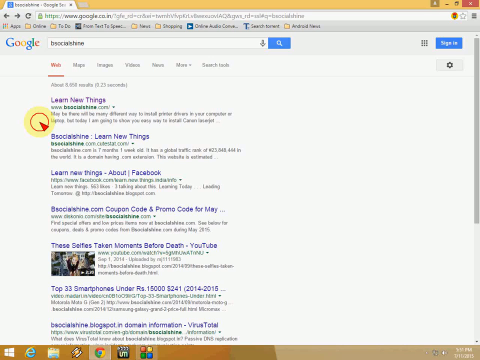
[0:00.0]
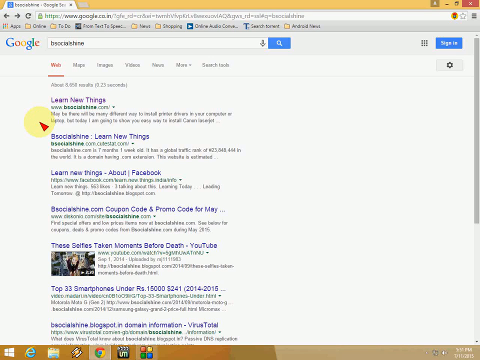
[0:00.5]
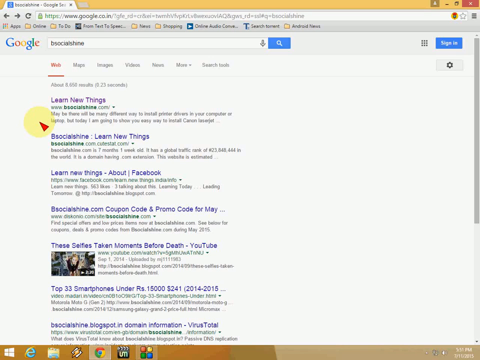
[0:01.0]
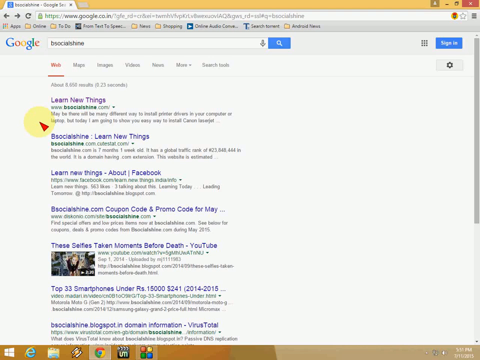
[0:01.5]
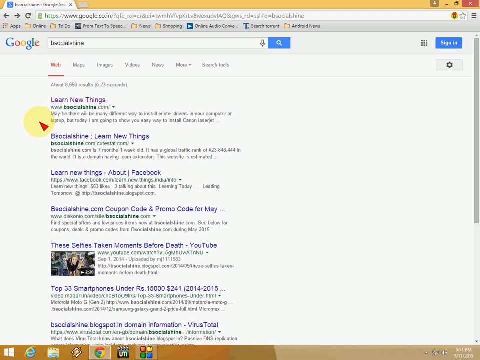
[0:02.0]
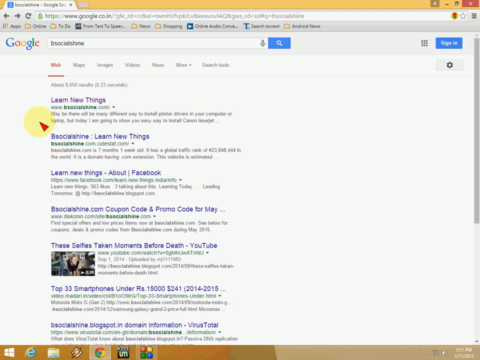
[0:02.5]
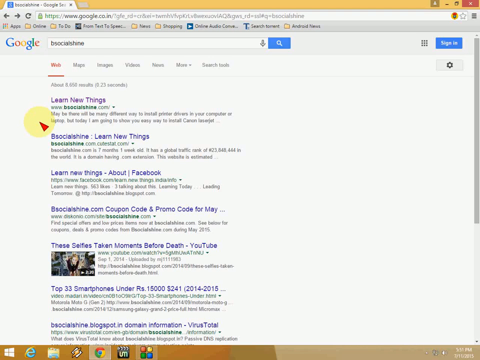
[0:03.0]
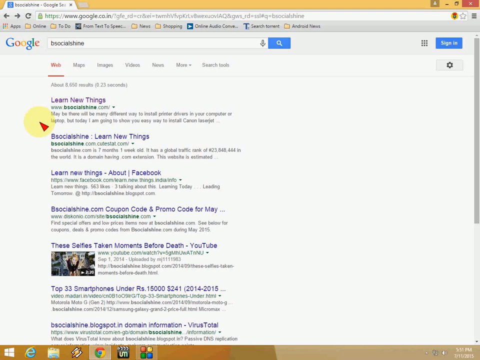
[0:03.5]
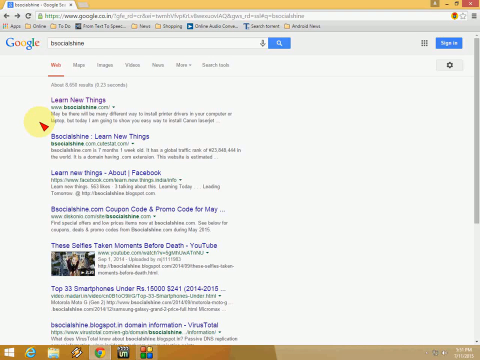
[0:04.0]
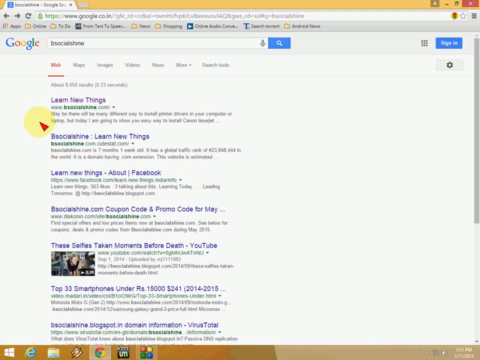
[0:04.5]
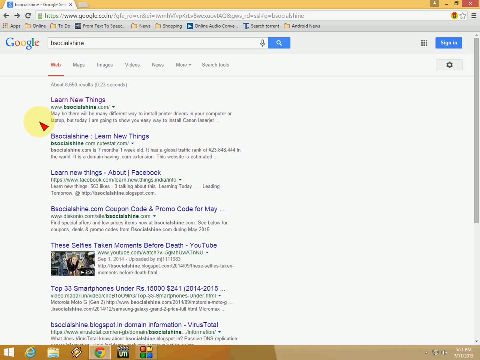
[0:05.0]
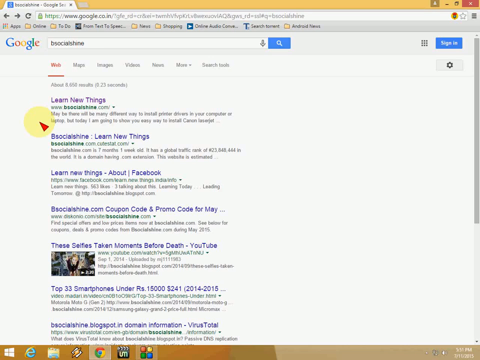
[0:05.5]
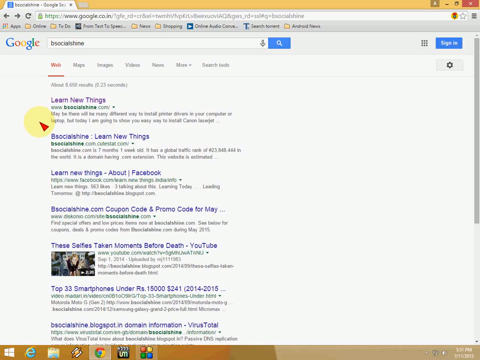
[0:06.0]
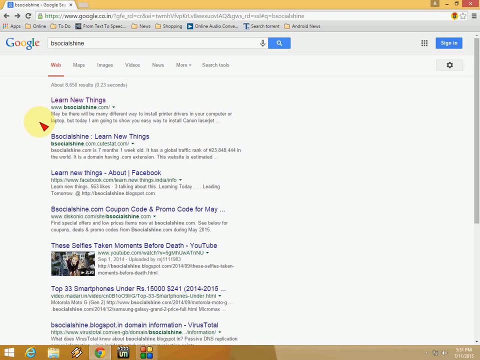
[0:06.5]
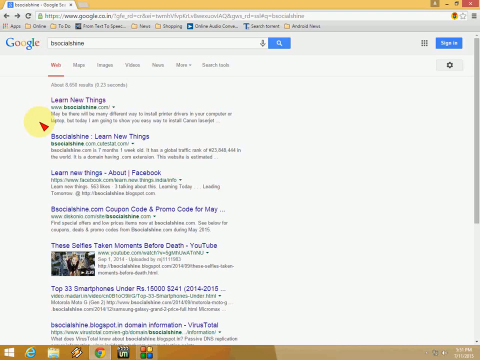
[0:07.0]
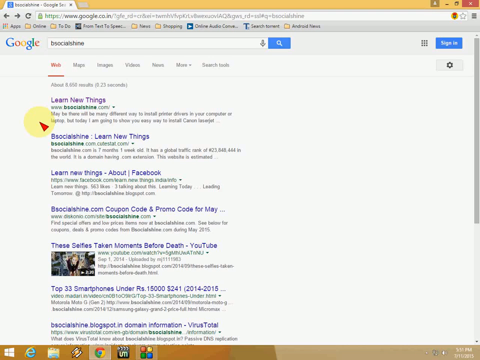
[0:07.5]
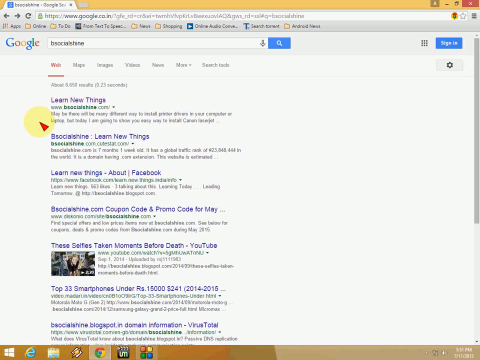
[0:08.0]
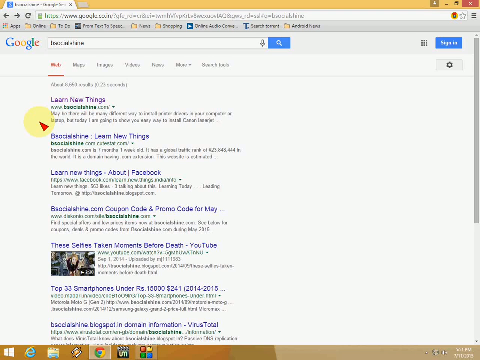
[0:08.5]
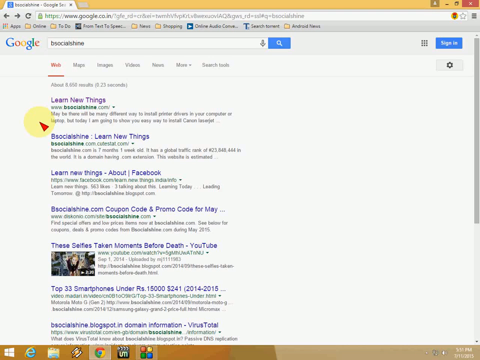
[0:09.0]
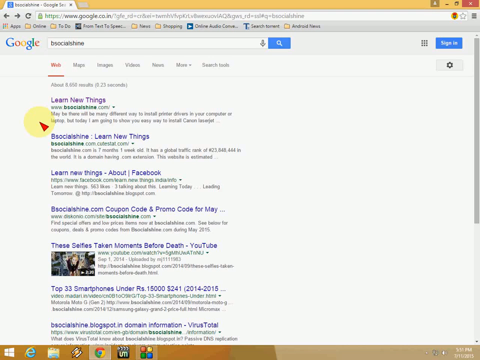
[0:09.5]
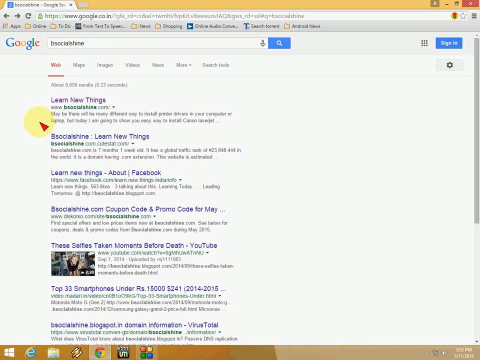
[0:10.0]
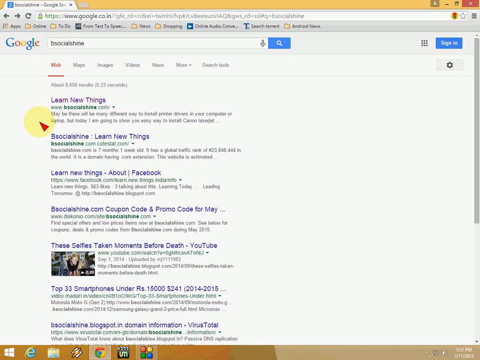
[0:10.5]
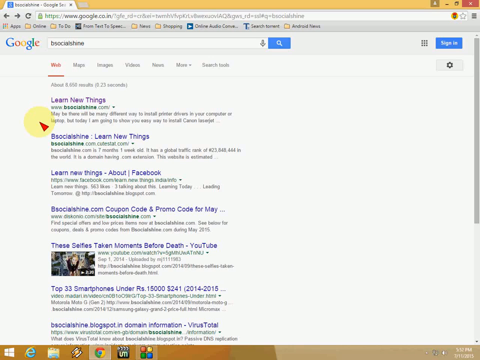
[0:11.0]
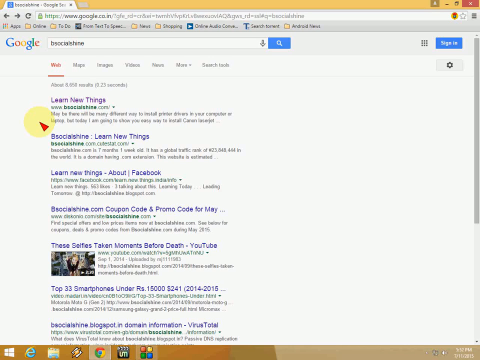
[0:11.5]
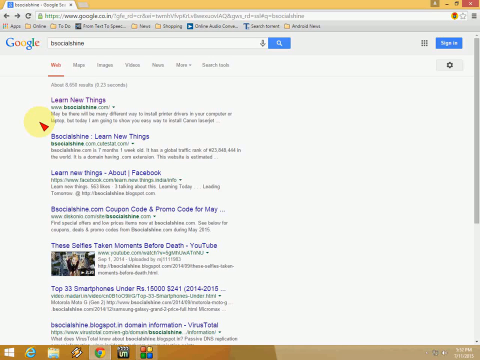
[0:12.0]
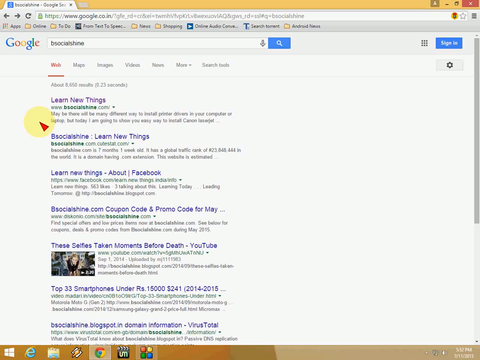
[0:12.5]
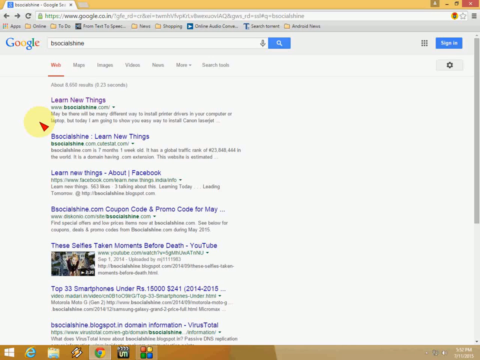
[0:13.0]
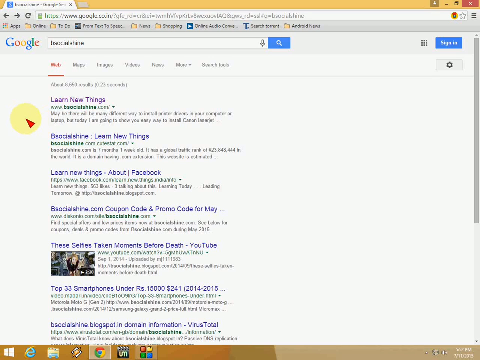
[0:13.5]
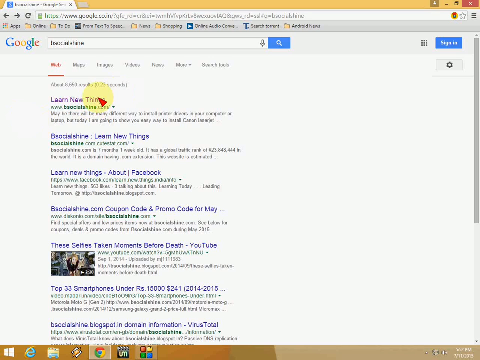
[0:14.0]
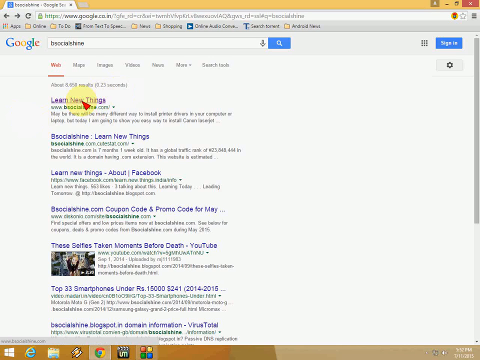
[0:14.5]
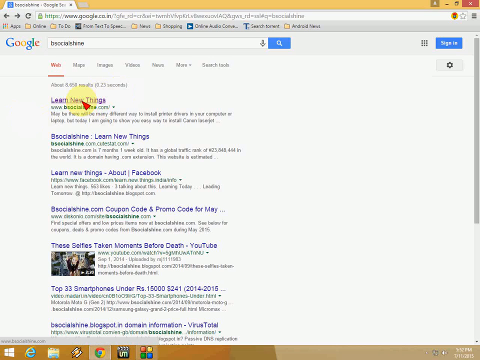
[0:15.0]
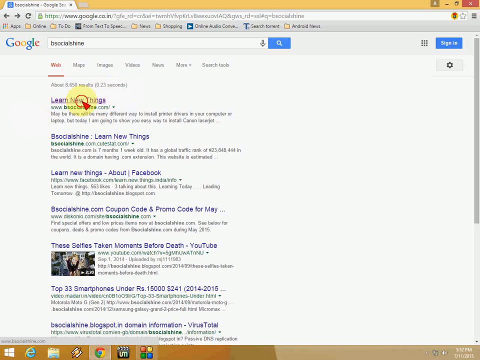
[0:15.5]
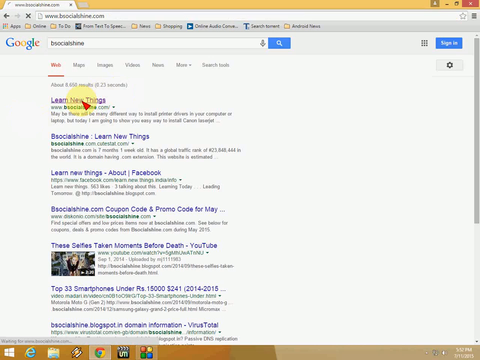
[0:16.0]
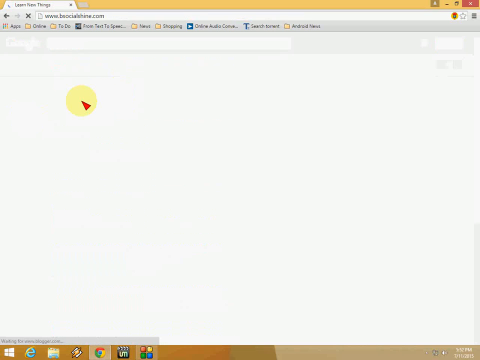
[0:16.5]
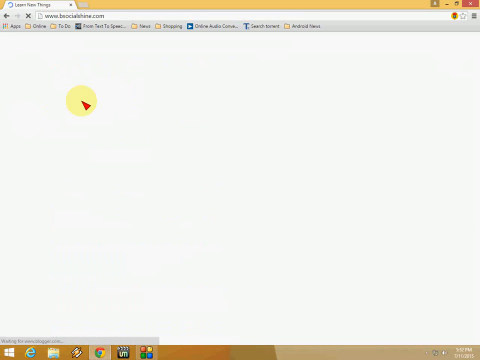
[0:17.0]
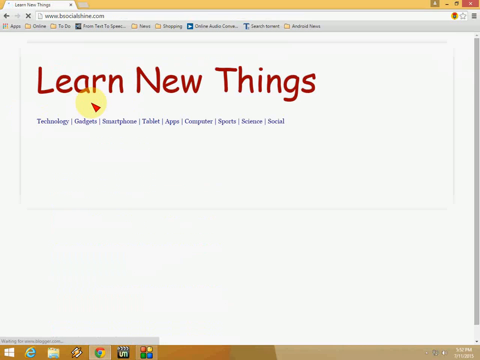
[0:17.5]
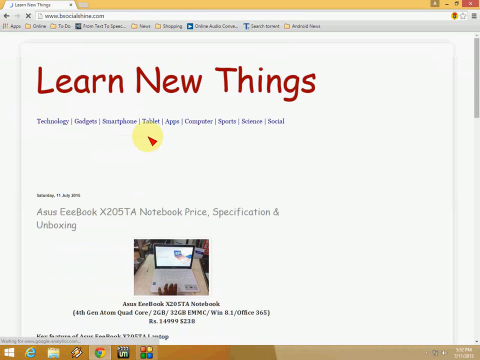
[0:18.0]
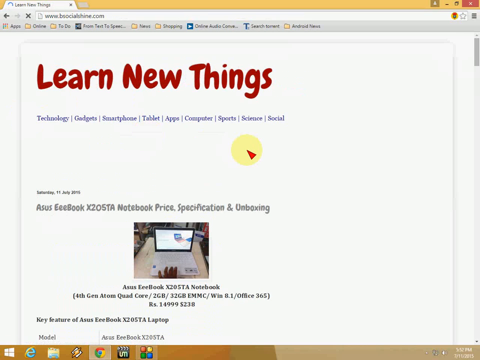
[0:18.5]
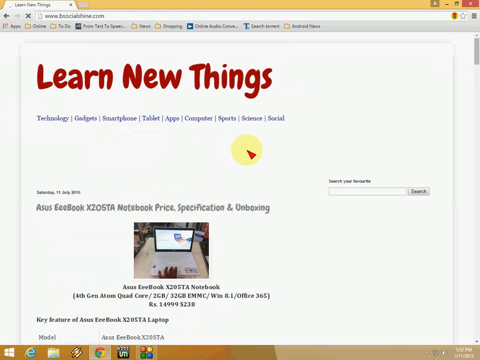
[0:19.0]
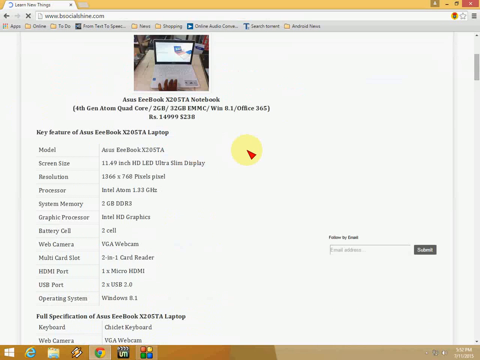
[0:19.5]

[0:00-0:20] A screen recording shows a Windows device on a Google web page, with a search for BeSocial Shine. The cursor is a red triangle with a yellow circle highlighted around it to show where the cursor is. The first result on the page is Learn New Things, besocialshine.com. The cursor moves to this first result and clicks its title, which is written in blue font, with the website underneath in green font and some description text below that in black font. The page background is white. When the link is clicked, a red circular icon grows from the tip of the cursor to indicate the click. The page goes white, and in the top left corner of the screen the tab name changes to "learn new things" with a spinning circle showing that it is loading. The website then loads, showing a white background with the red text "learn new things". Underneath this title is a row of blue menu items labeled "technology, gadgets, smartphone, tablet, apps, computer, sports, science, social". Below that is a review of an Asus E-Codebook X205TA laptop, along with an image and some specifications of the laptop. All the text here is black, and the small image lines up with the text. The background remains white.